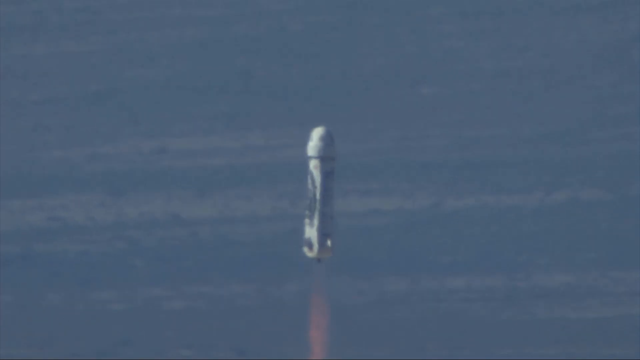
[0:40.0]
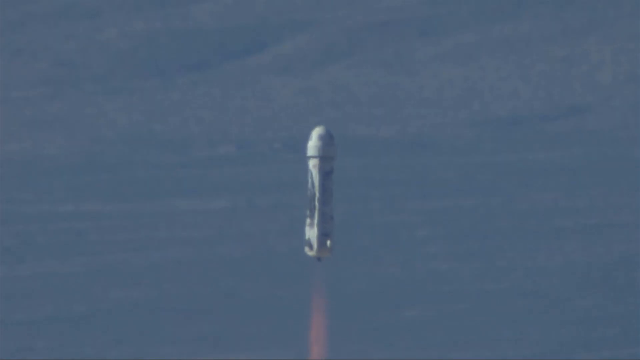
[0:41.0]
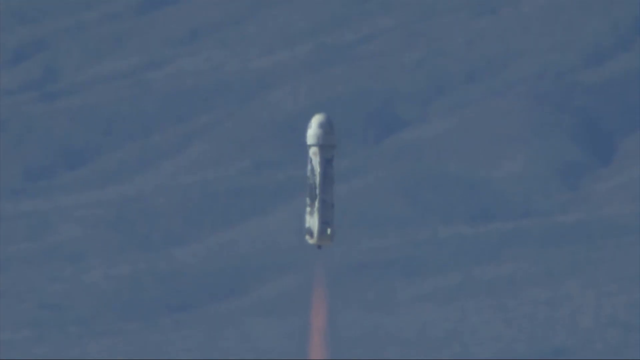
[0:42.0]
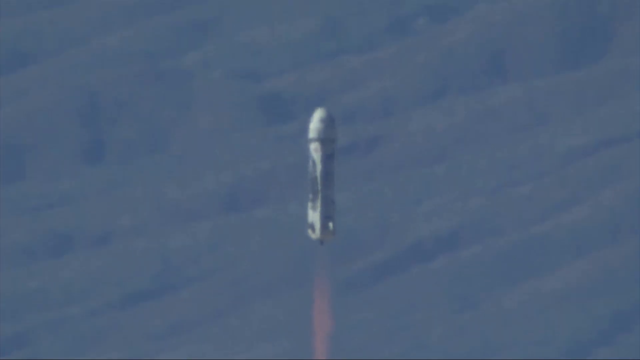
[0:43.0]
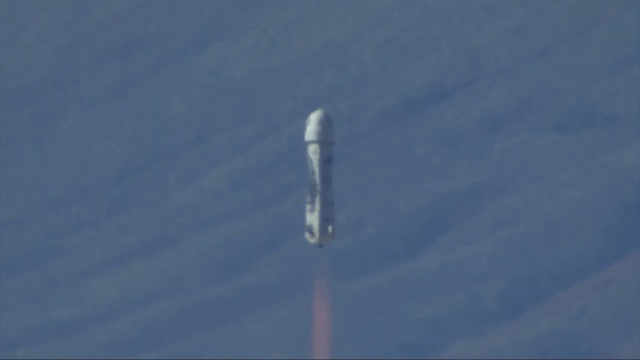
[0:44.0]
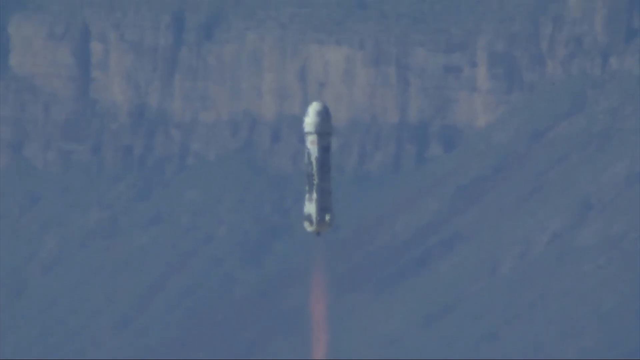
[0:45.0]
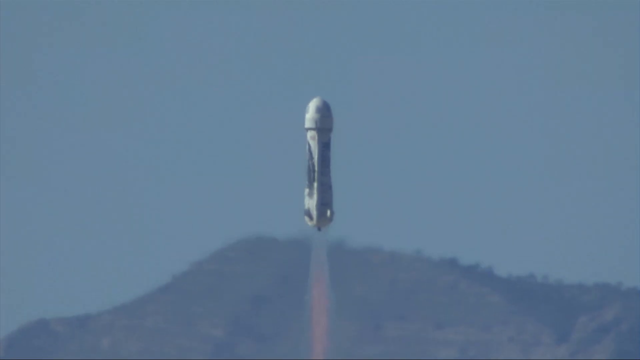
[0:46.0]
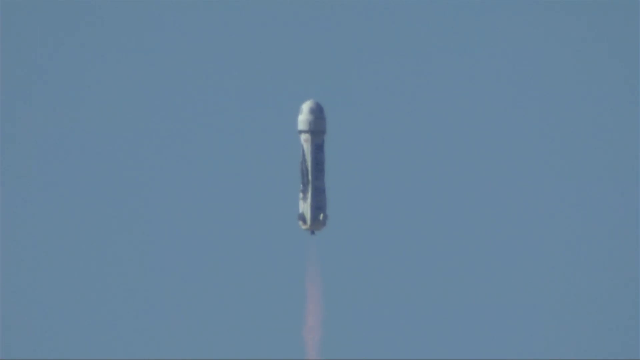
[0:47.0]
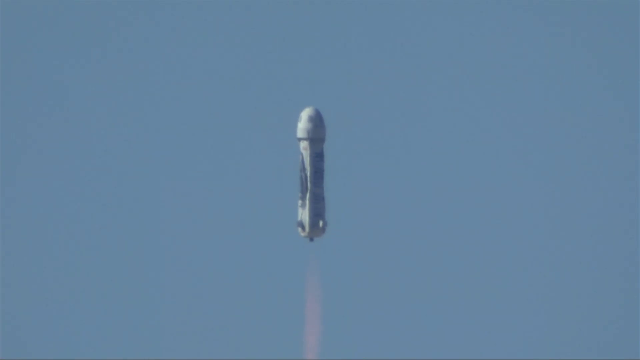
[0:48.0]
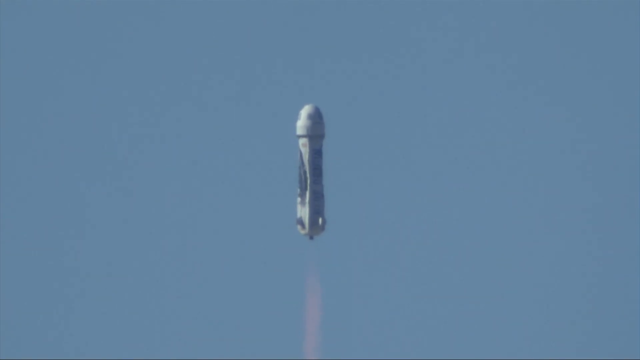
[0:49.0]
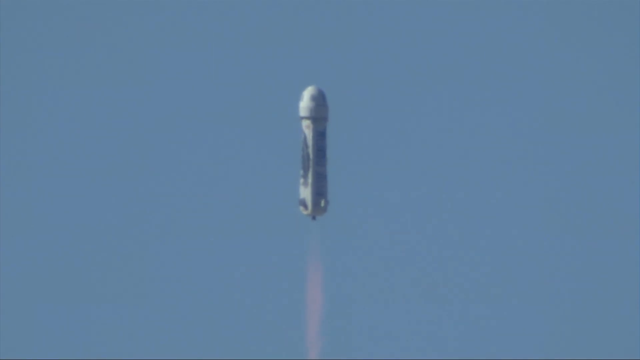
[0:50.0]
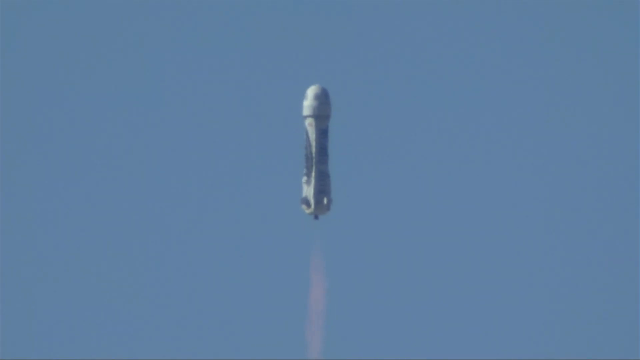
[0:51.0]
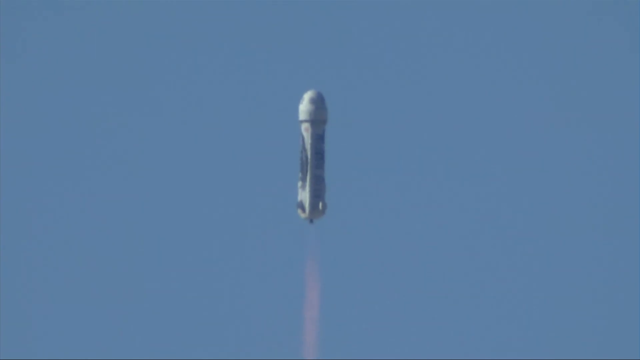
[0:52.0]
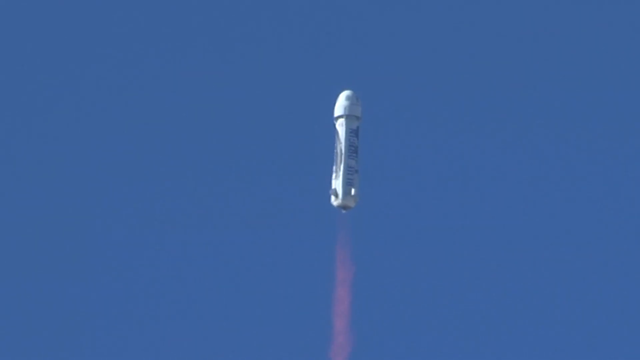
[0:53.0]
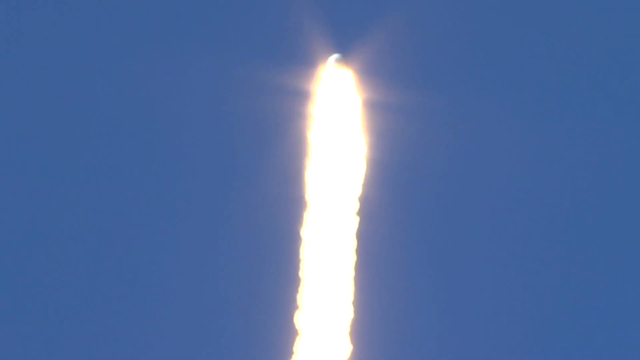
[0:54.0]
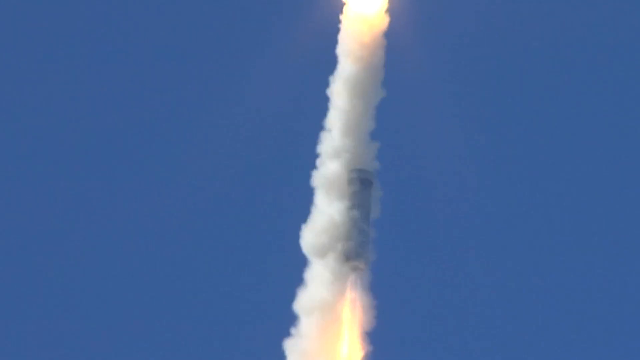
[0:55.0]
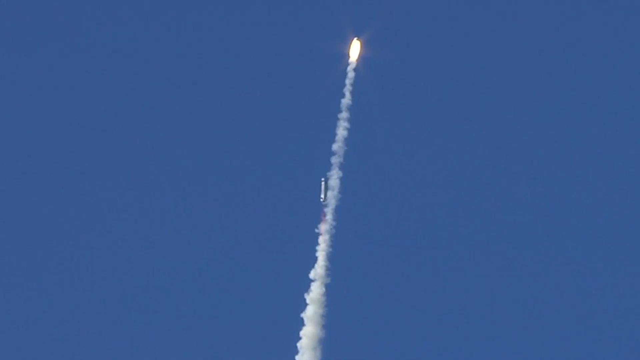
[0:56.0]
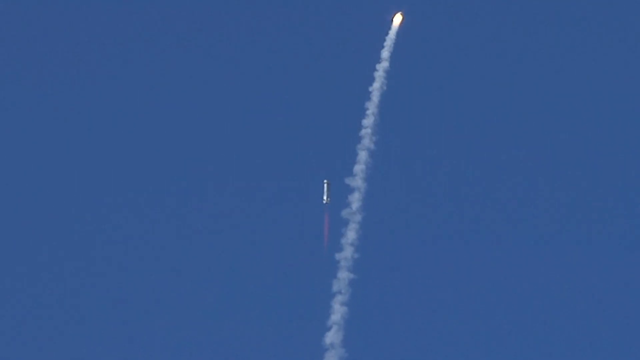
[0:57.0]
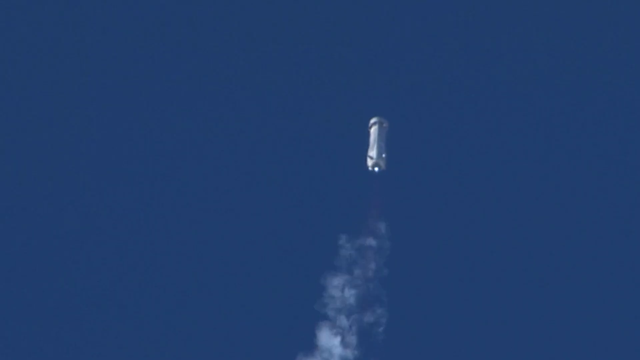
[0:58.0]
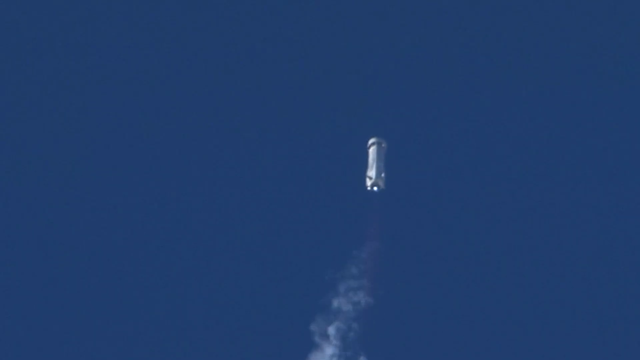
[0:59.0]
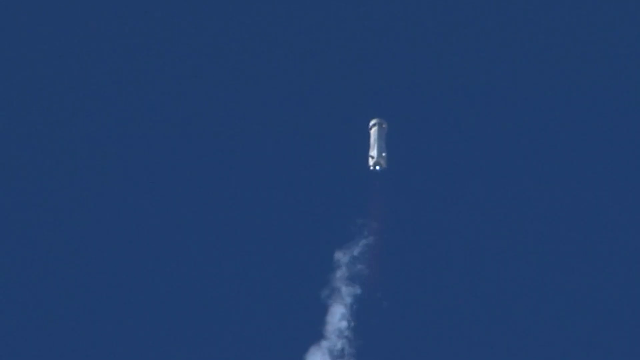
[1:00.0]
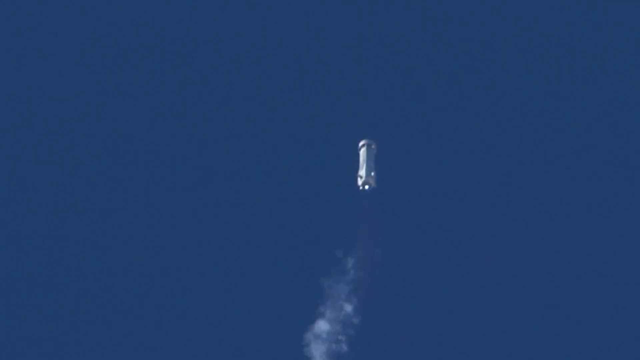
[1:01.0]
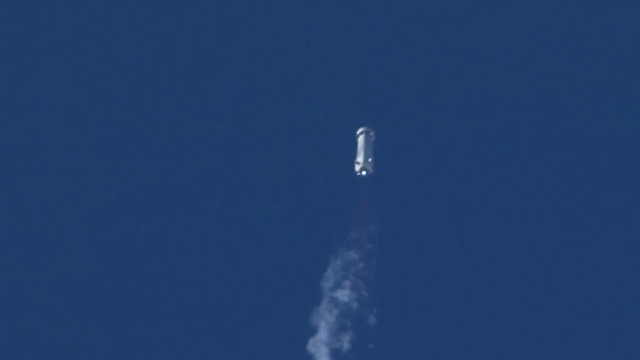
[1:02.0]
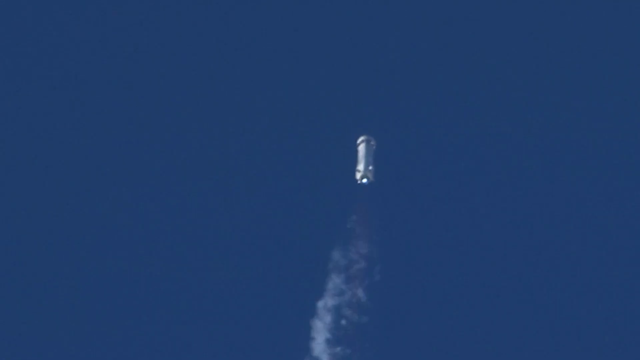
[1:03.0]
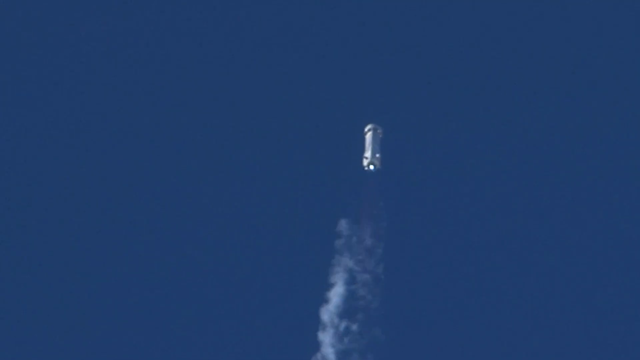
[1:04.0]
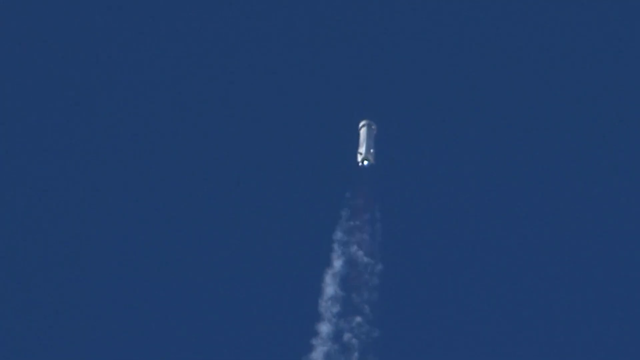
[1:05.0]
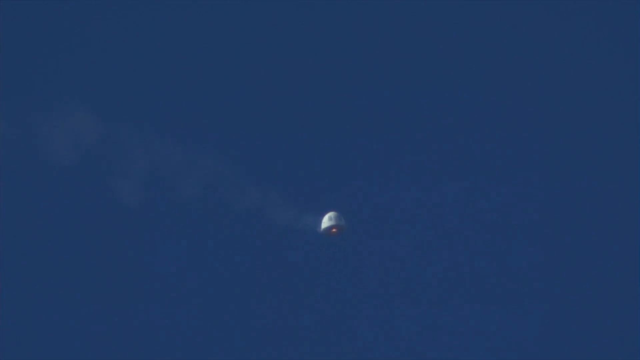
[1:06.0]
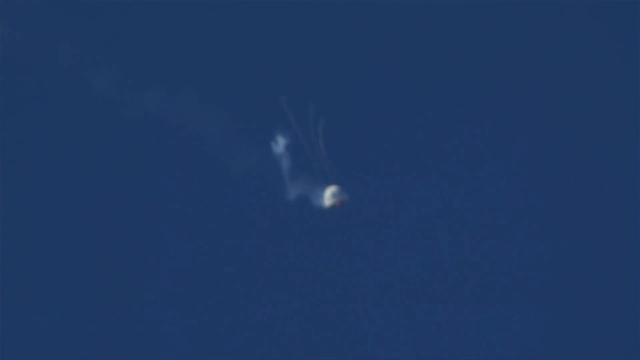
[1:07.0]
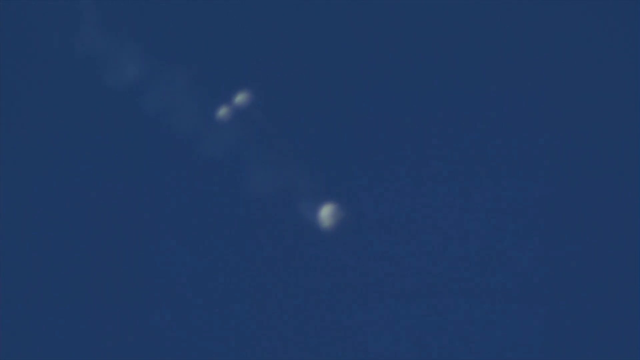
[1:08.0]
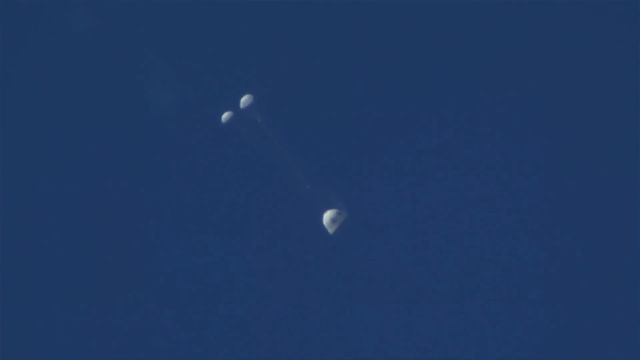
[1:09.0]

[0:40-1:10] The rocket has lifted off from the ground, and the camera follows it as it moves straight upward, flame shooting out below it from the engines. At first the rocket passes in front of the mountains, then it is in front of the blue sky for several seconds. The camera angle then switches to a view from slightly more to the left. The sky has become a much deeper blue, and the column of fire from the bottom is very visible. Suddenly there is an explosion of smoke and flame as the section carrying the capsule boosts it further. The section carrying the capsule begins to come back to Earth, the metal exhausting some white vapor behind it. The rocket capsule then begins to descend, and three parachutes shoot up out of the top of it and slow its descent.